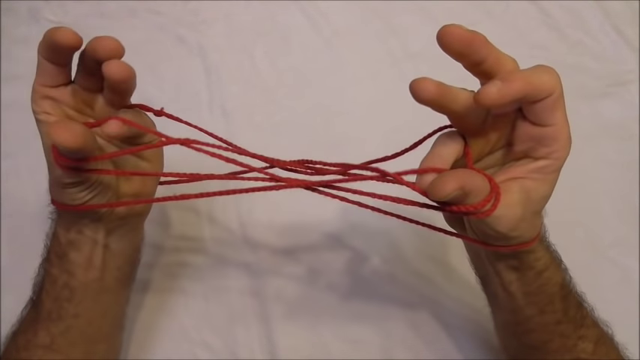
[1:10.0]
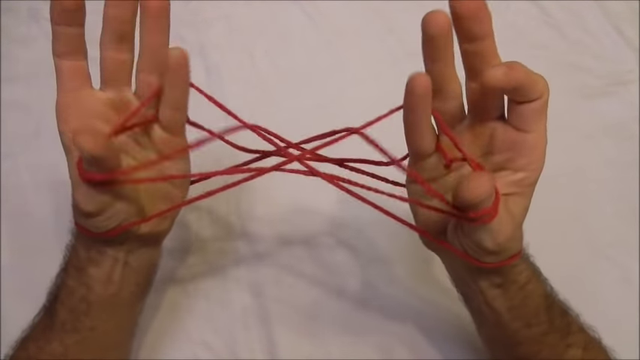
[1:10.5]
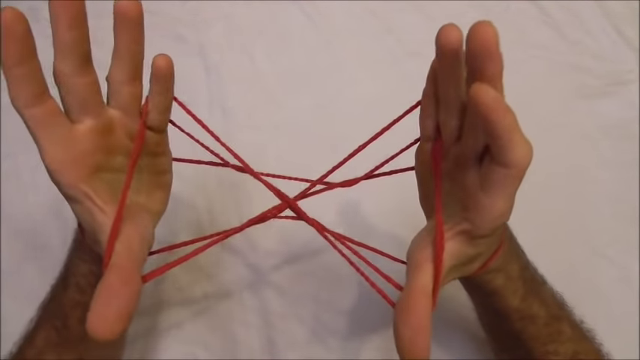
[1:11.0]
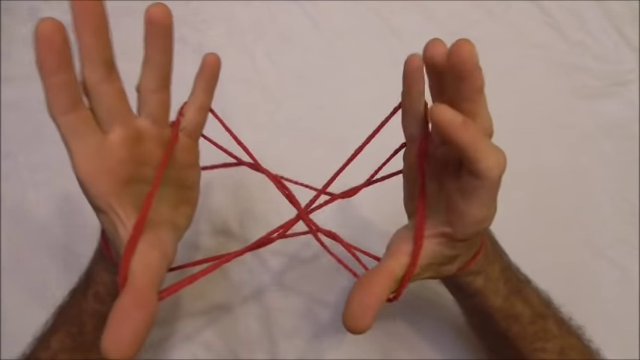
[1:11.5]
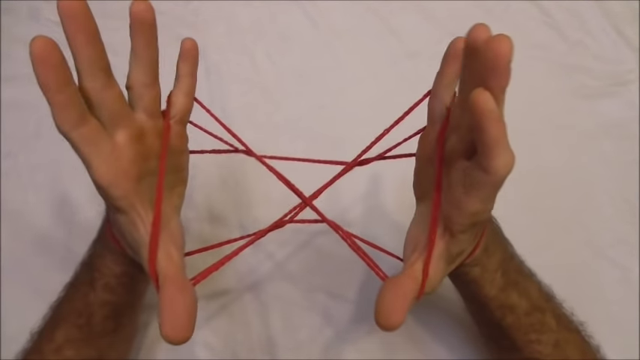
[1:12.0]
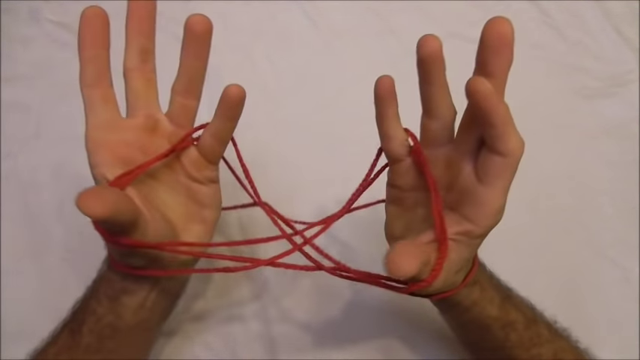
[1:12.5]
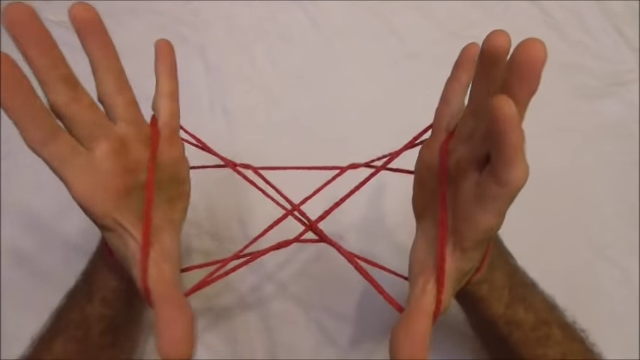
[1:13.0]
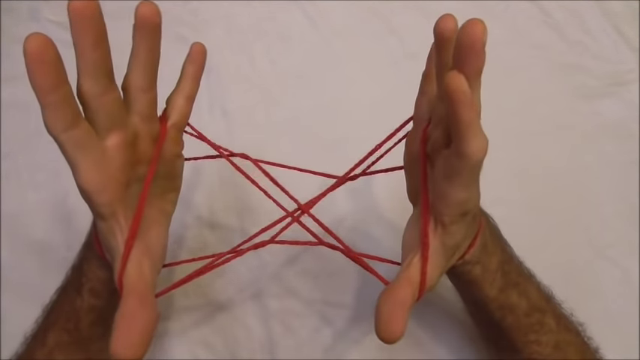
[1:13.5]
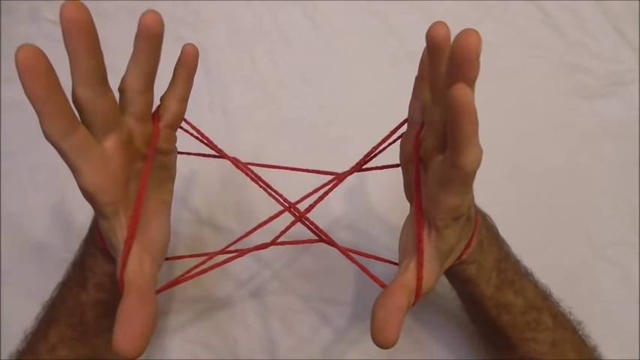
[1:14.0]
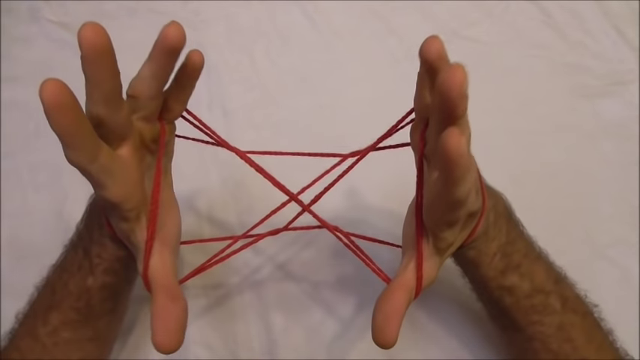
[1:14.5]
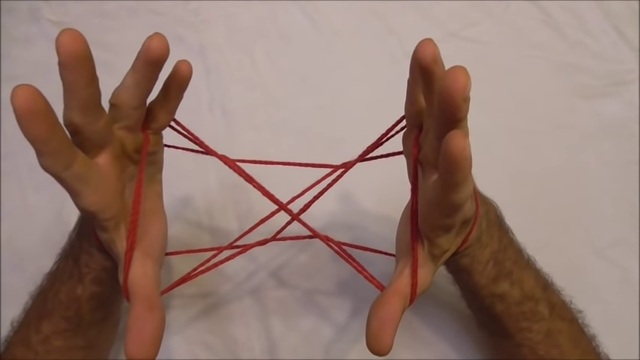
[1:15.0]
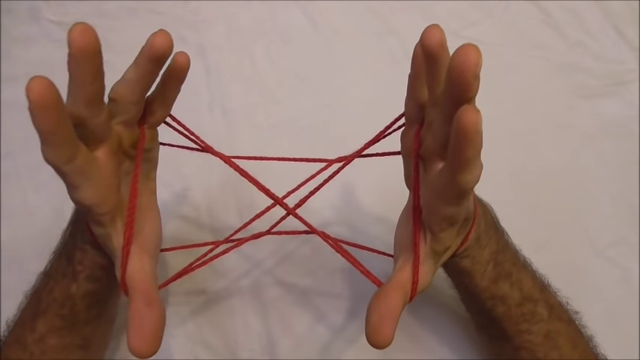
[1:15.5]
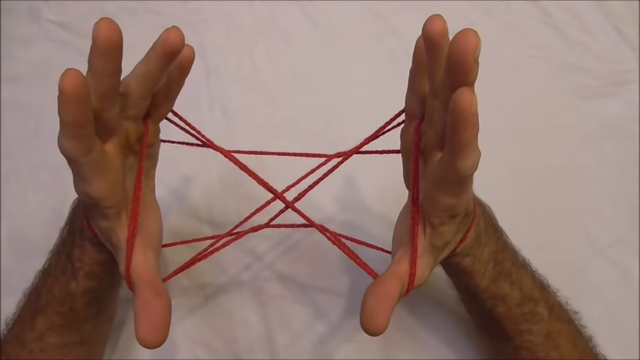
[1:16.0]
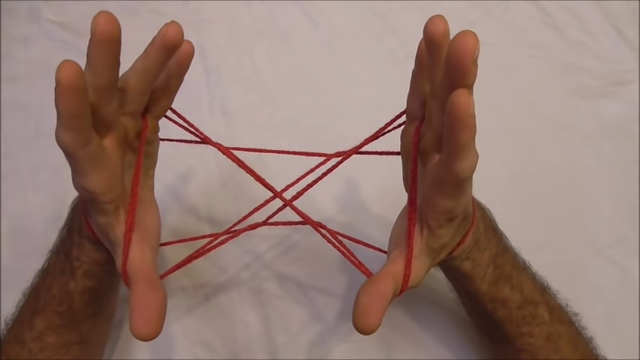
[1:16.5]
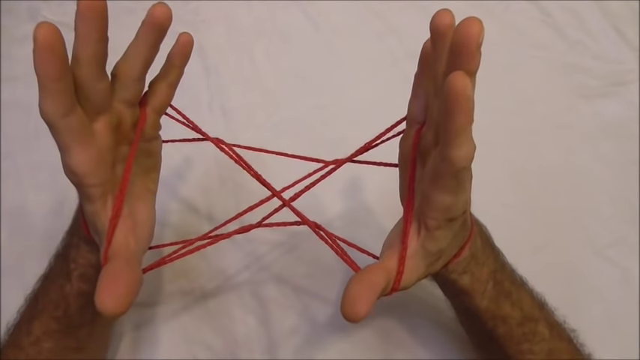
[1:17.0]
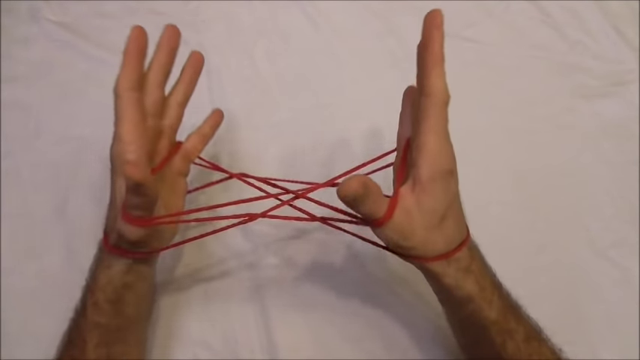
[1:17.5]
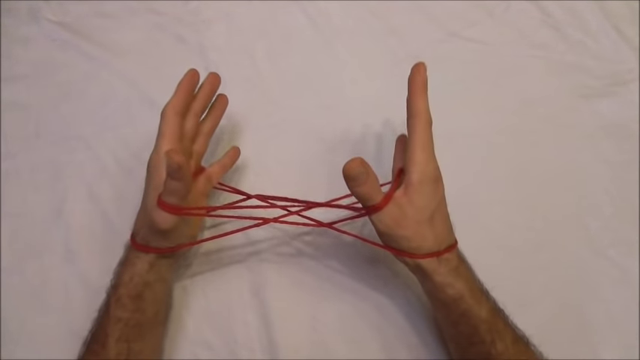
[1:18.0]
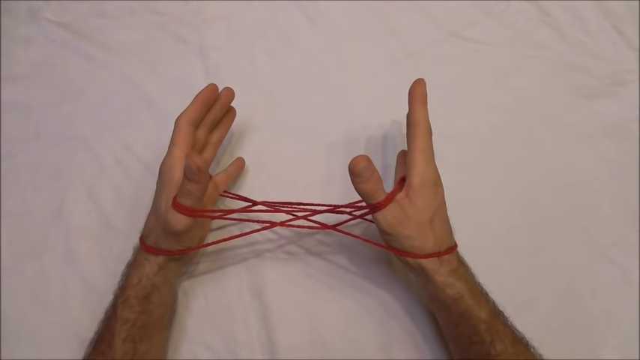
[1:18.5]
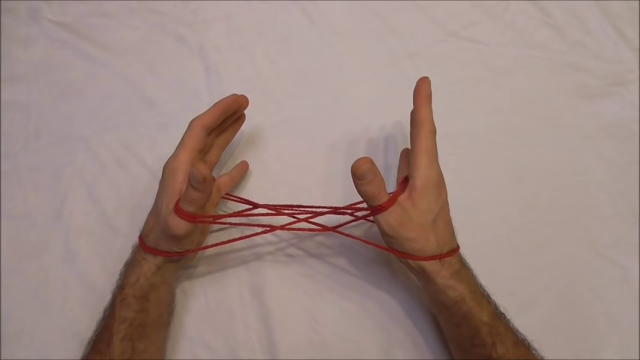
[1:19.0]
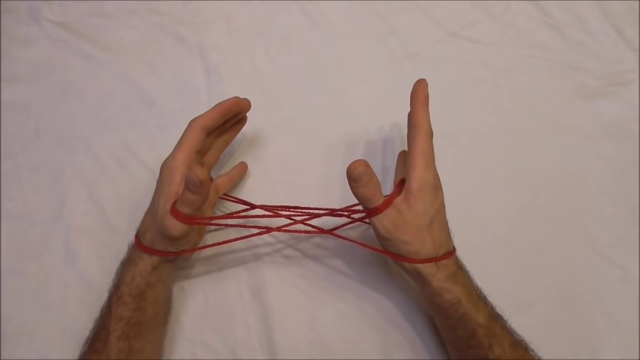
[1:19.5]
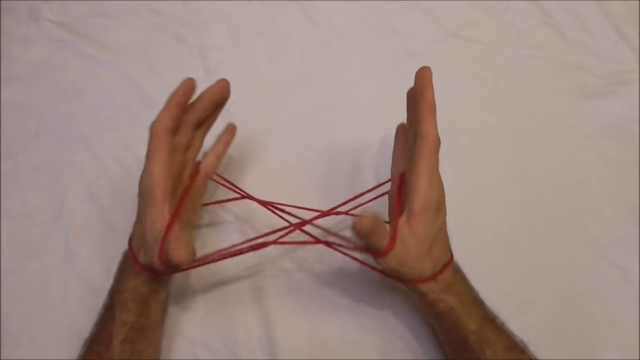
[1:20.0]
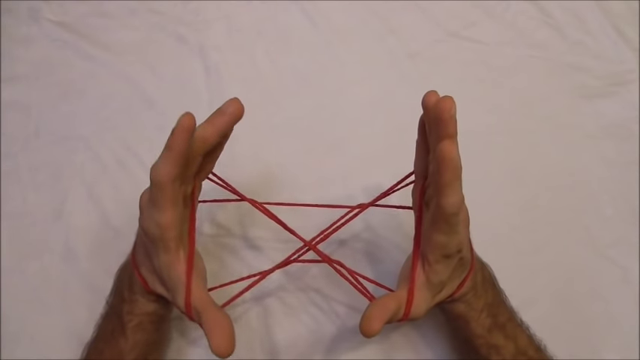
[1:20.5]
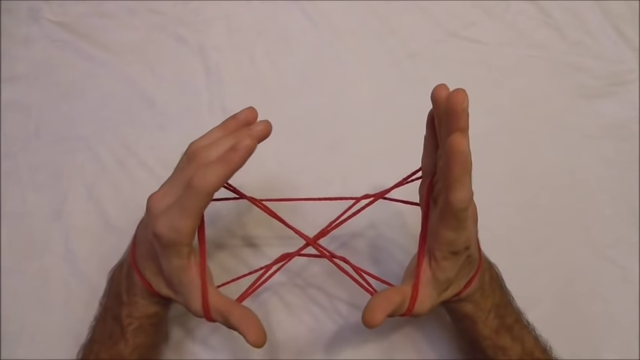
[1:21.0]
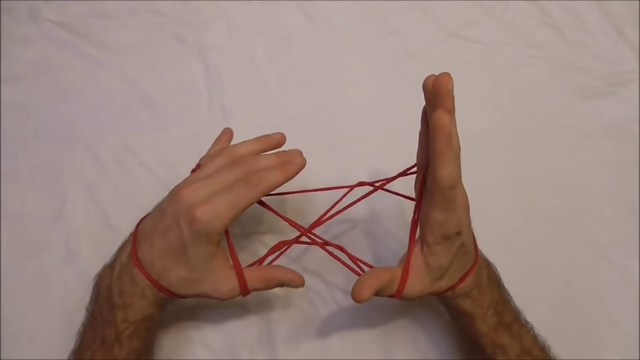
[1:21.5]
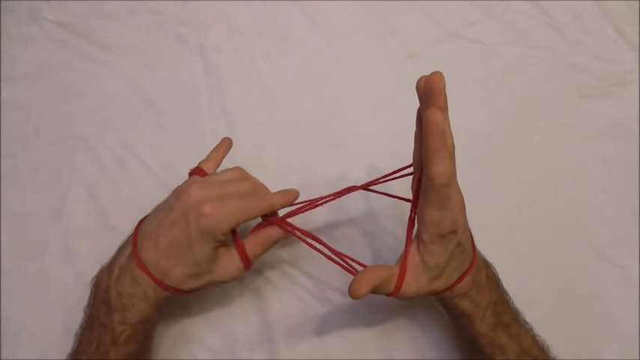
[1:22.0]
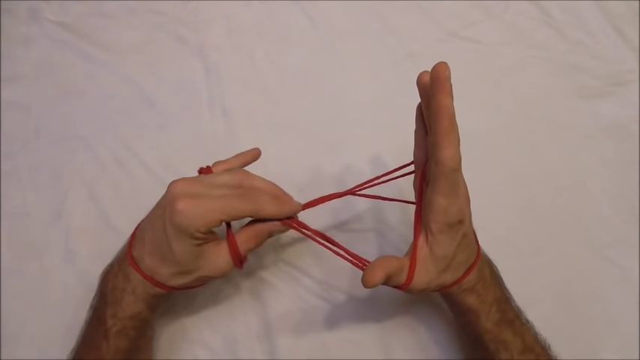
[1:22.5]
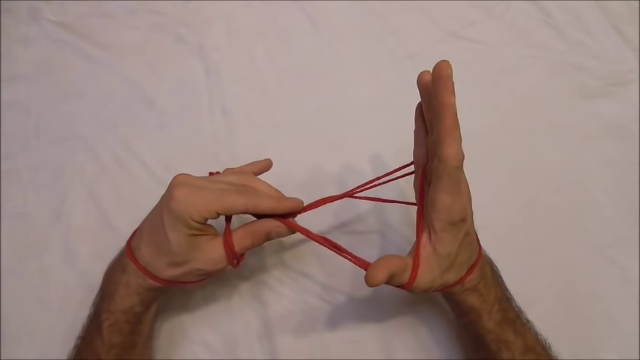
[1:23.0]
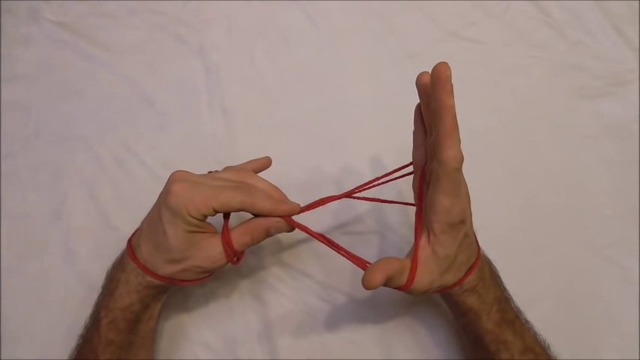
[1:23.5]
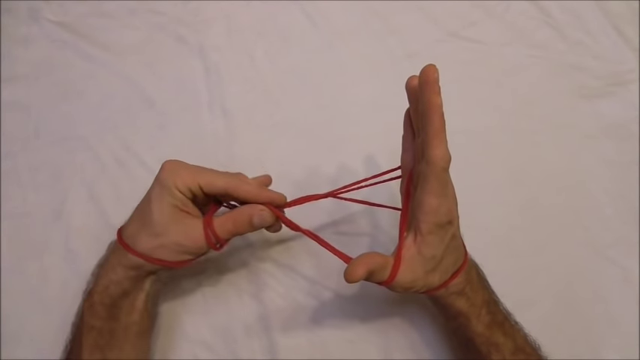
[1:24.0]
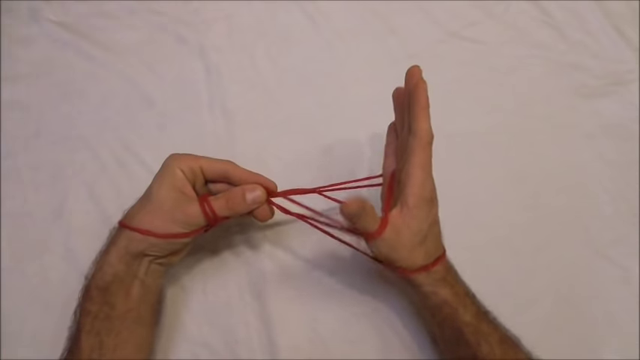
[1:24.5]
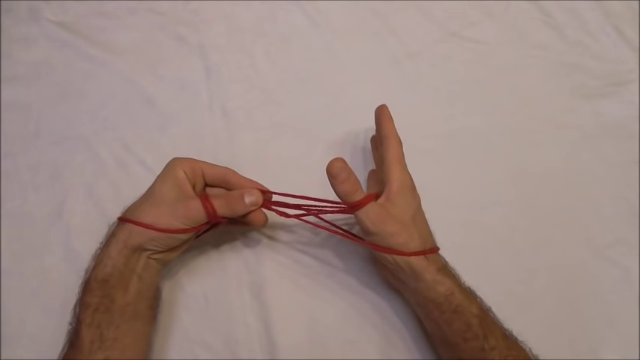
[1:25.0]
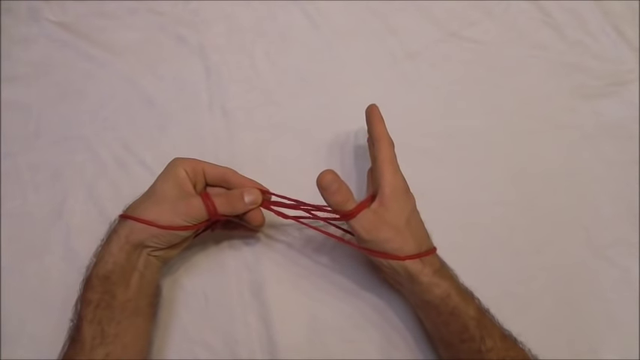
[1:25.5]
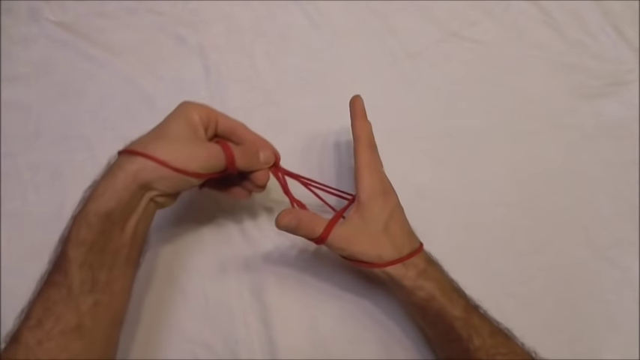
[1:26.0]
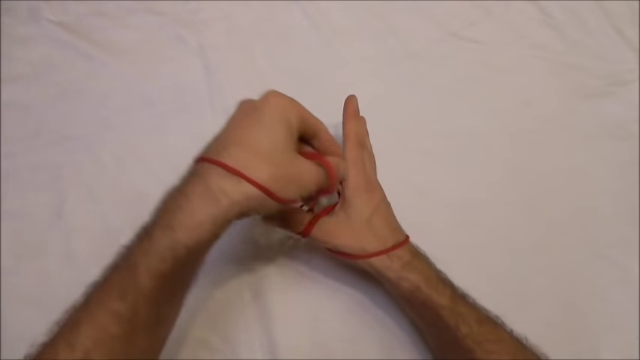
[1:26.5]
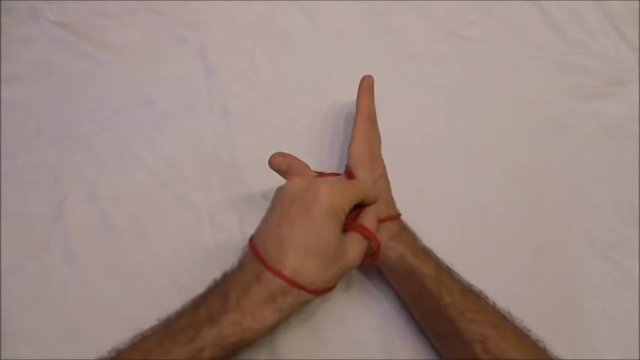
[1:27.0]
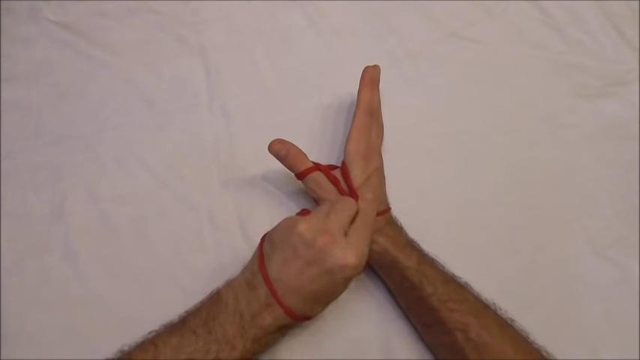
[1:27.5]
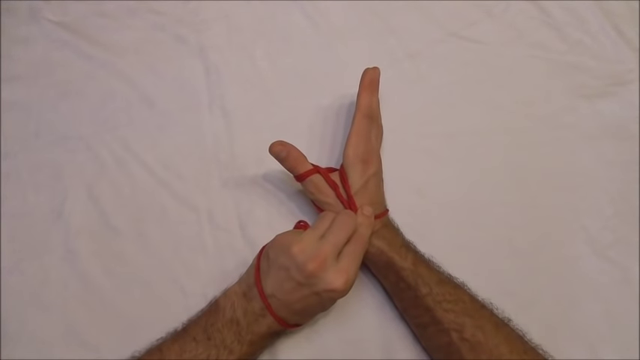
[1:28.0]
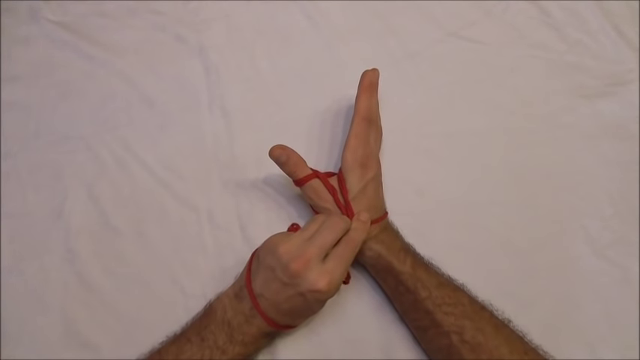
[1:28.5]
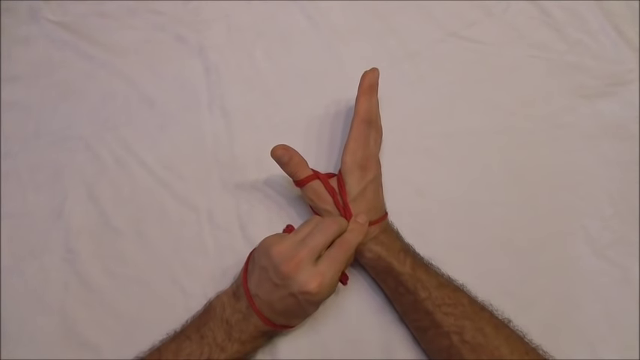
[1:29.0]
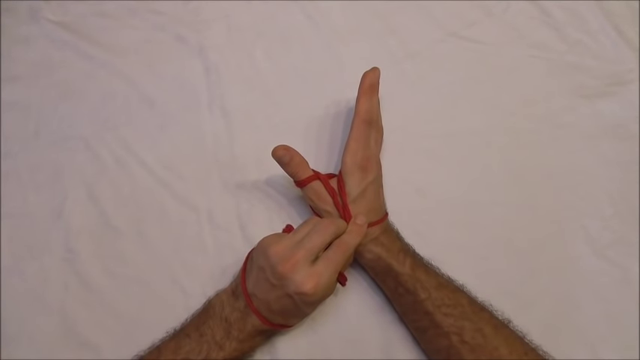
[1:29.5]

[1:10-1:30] Against the white background, the red yarn is in an X-shaped zigzag pattern between his stretched-out left and right palms. Only his pinkies and thumbs are now in the yarn, and it is also wrapped around his wrist. He continues stretching his palms, keeping both hands straight up, then turns them down onto the white linen sheet with his left and right hands diagonal across. Using his left hand, which is still inside the red yarn, he pinches the middle of the pattern with three fingers, then puts his right hand down as the yarn begins to wrap around between his thumb and forefinger, stretching to his wrist. The pattern is now gone, with the yarn in the palms of his right and left hands.